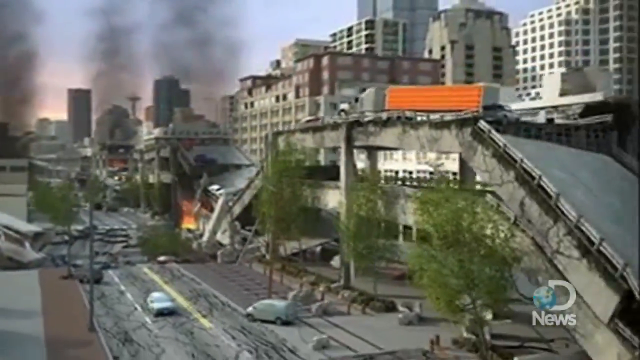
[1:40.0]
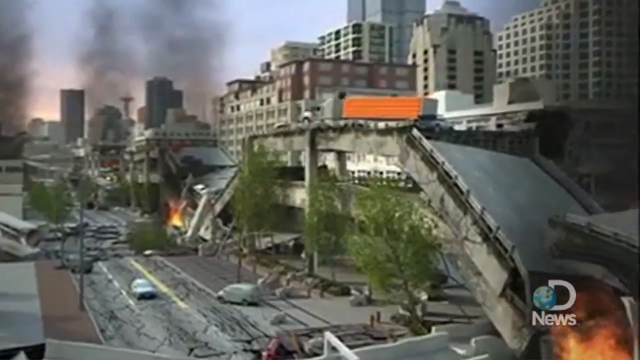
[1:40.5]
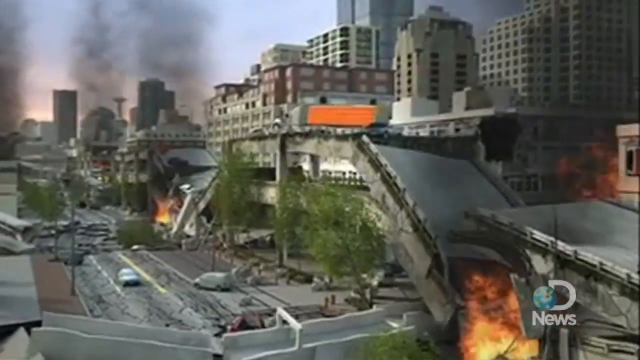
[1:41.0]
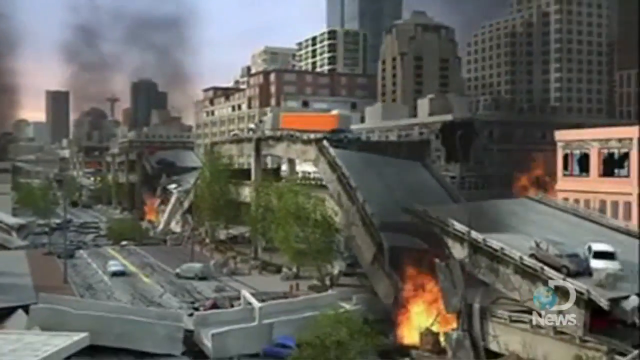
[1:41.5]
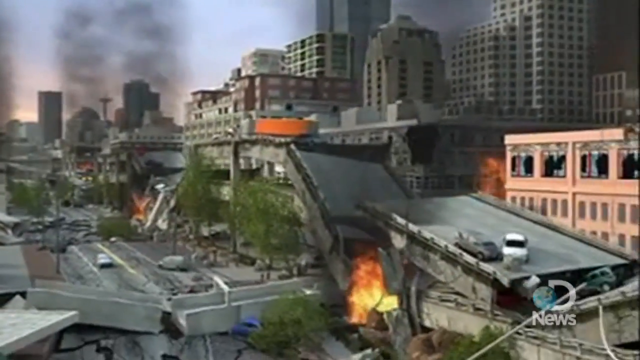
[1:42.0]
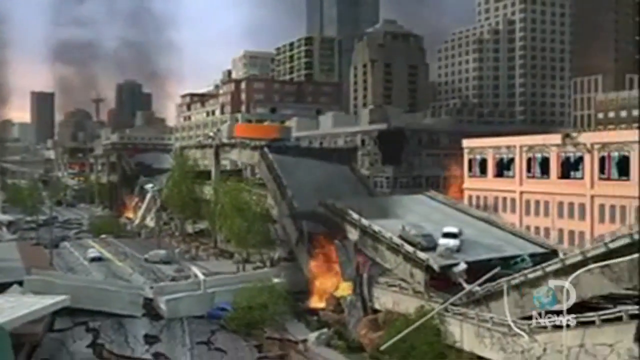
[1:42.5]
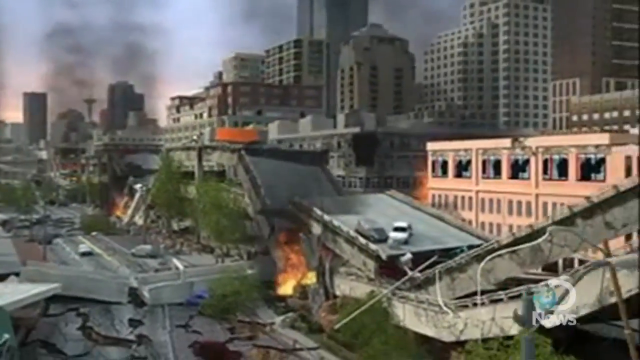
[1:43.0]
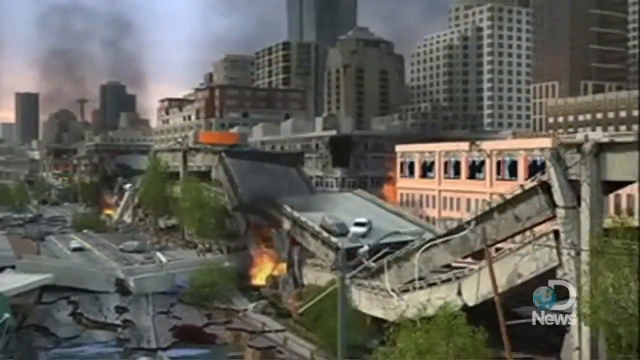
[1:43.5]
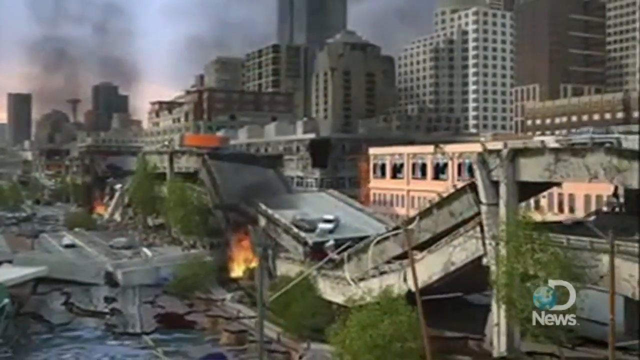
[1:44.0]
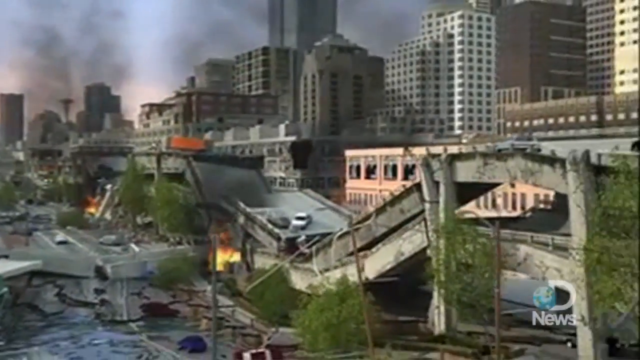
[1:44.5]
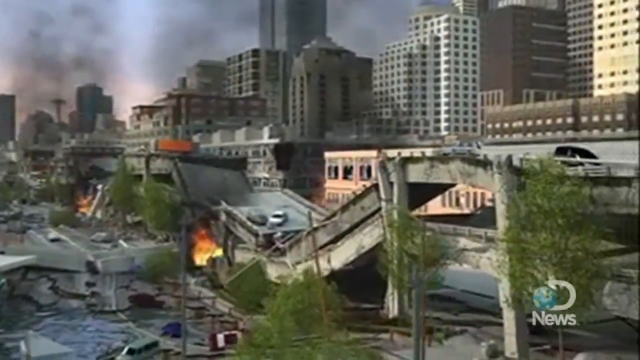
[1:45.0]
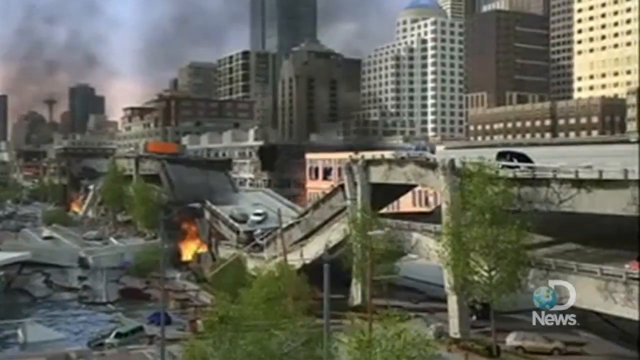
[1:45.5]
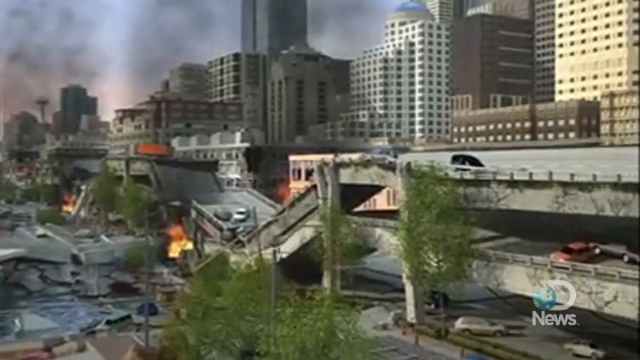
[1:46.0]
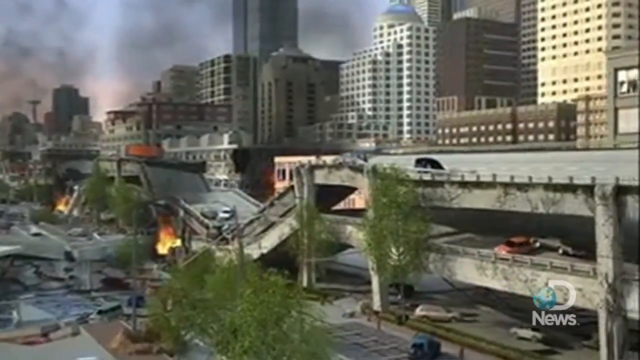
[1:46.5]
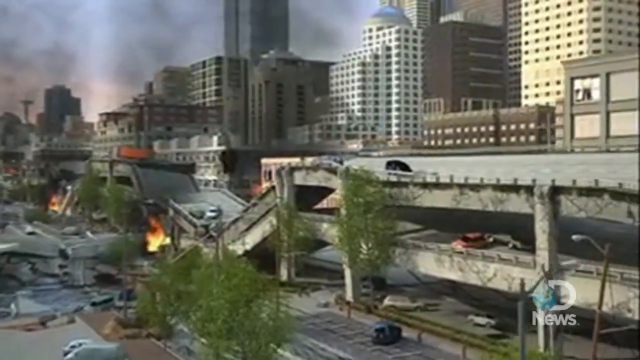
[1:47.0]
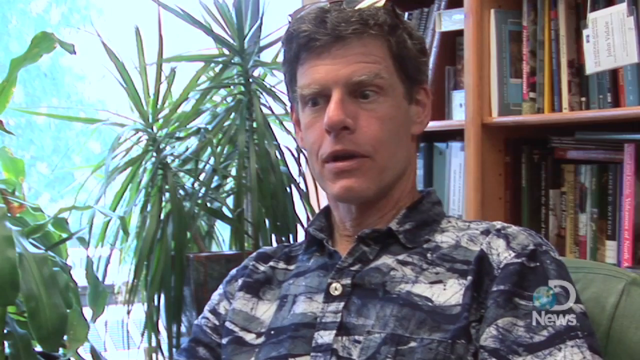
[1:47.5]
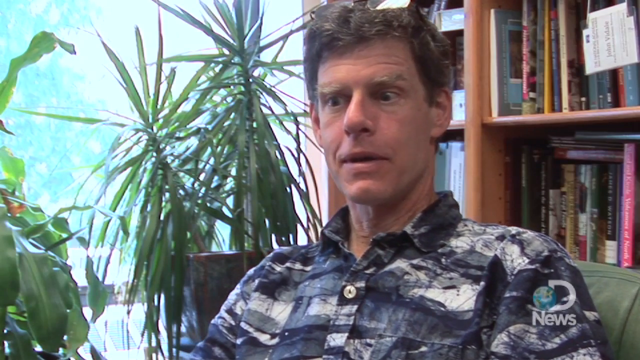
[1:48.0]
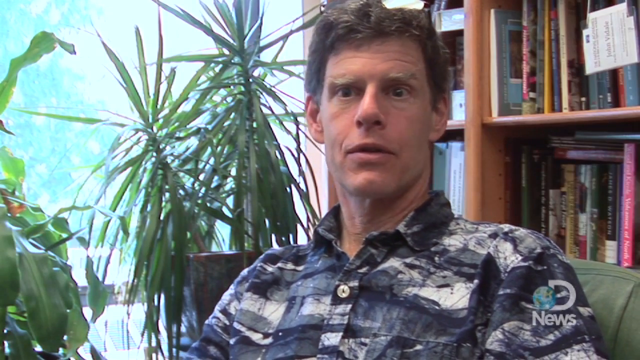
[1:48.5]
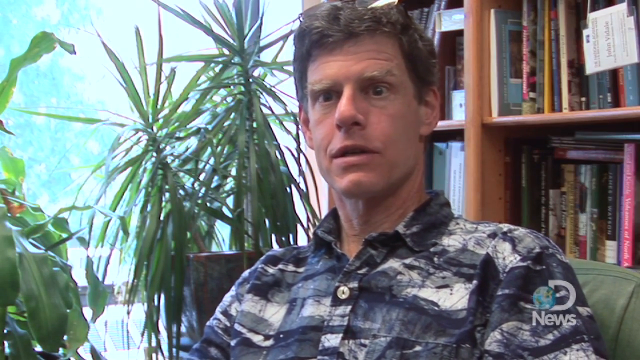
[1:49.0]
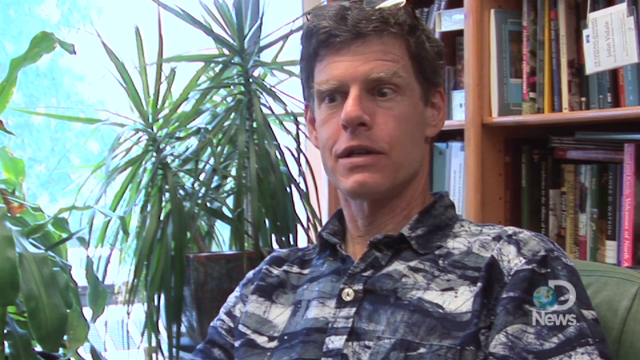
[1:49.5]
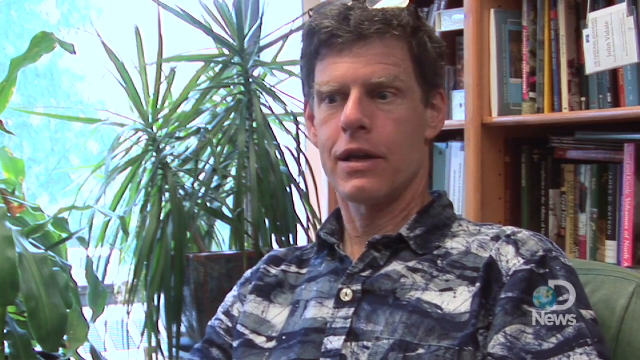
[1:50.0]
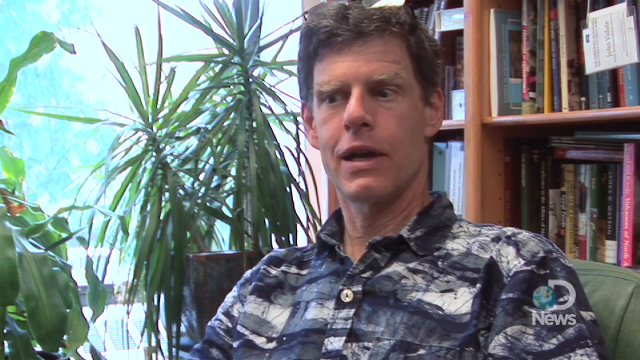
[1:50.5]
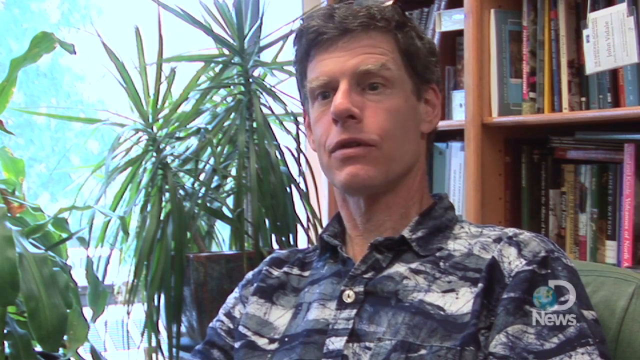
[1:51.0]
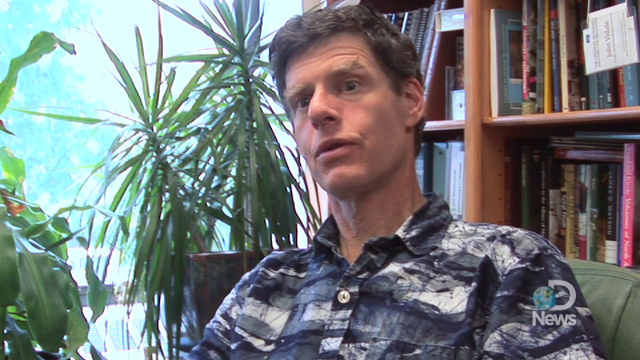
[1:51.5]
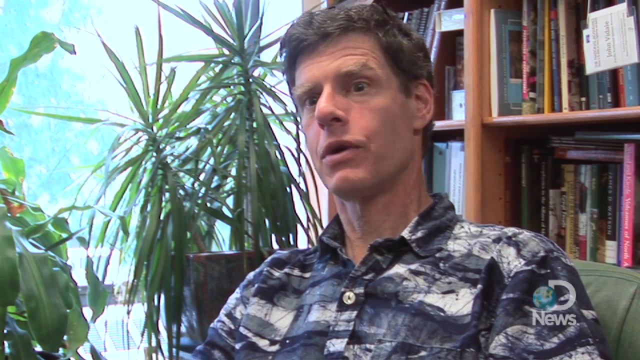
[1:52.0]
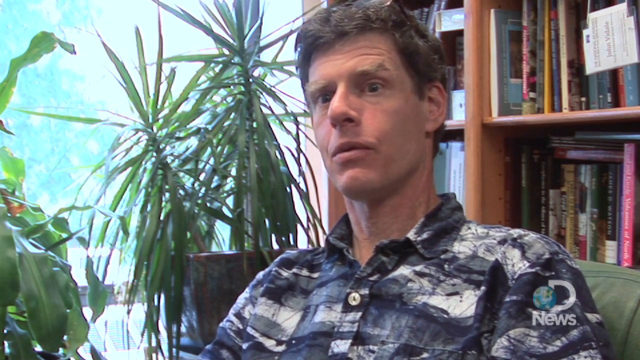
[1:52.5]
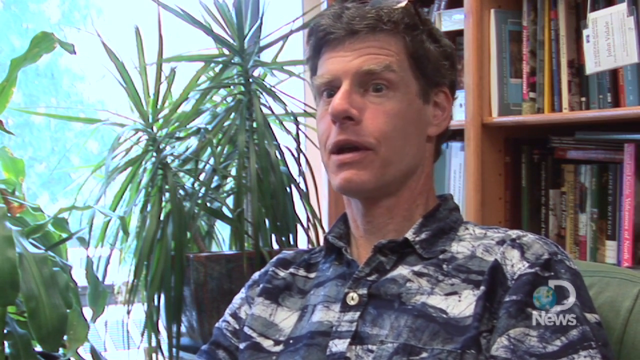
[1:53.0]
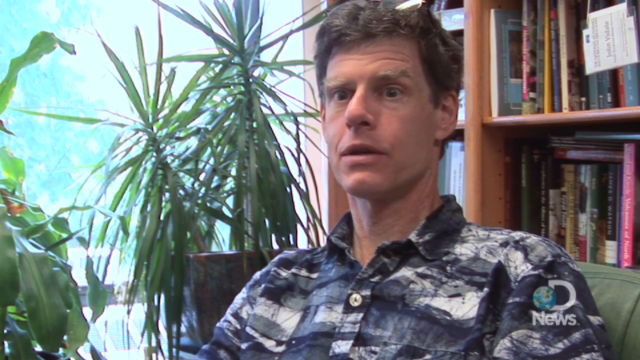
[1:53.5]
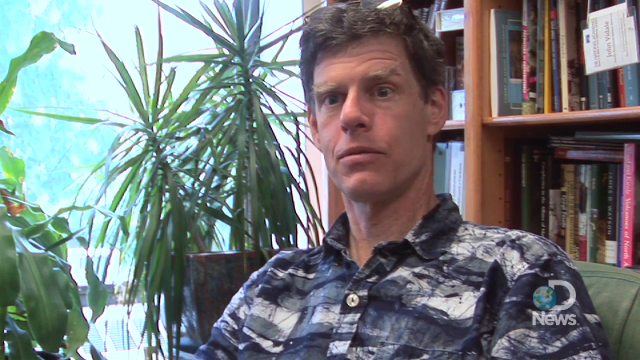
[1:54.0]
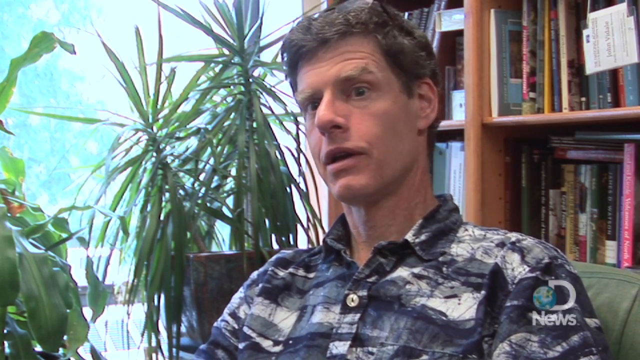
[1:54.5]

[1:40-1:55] The devastation of the highways continues in the animation. Professor Vendale speaks again. The highways are completely impassable, with many cars on the roads. On the single-layer highway, not the double-decker, cars have fallen into the water where the road buckled underneath them. Power lines are down, and there are fires and smoke. The title says it is "imminent".